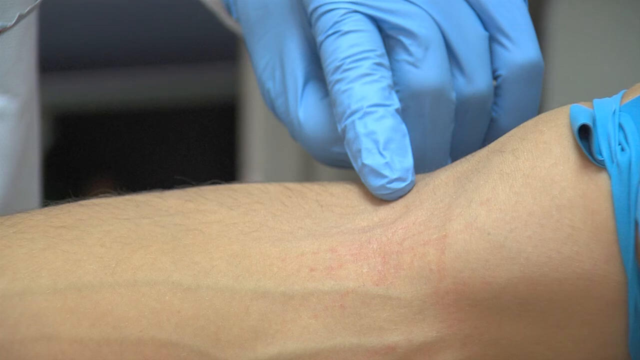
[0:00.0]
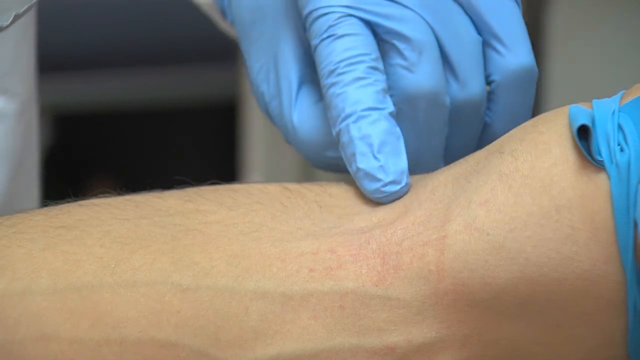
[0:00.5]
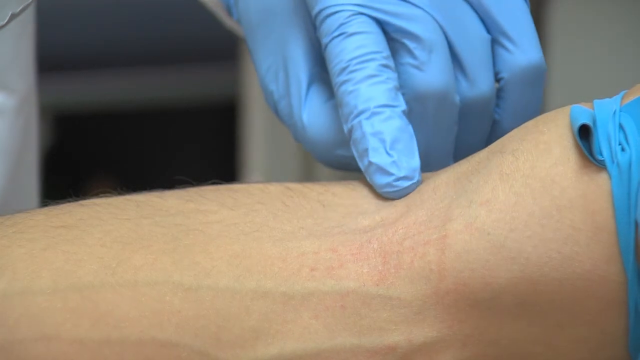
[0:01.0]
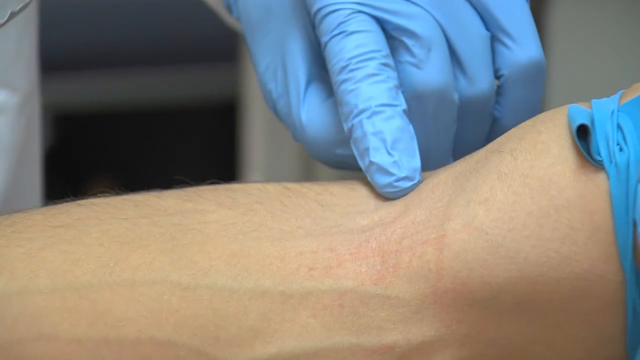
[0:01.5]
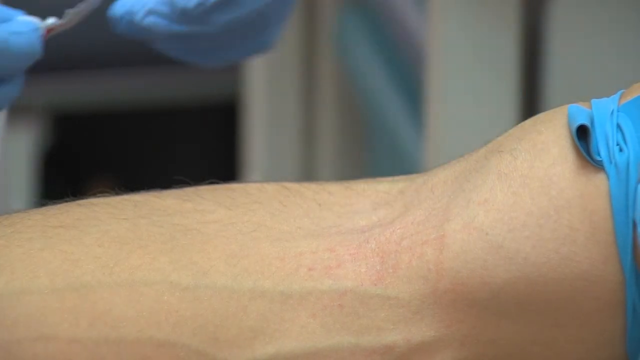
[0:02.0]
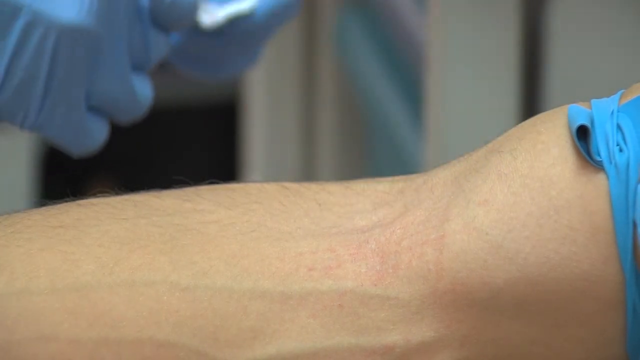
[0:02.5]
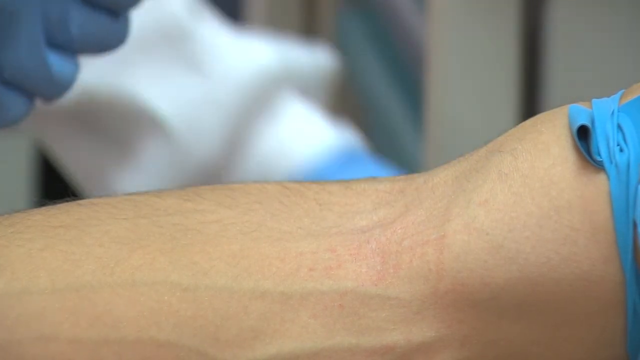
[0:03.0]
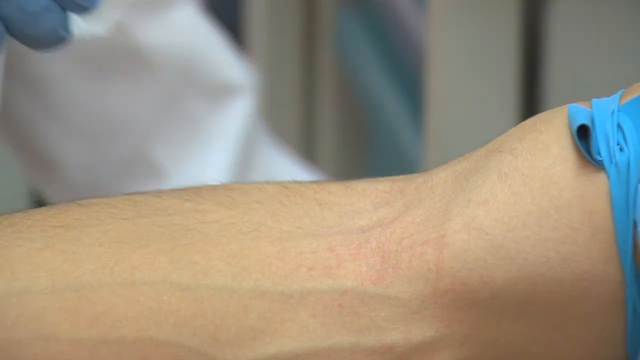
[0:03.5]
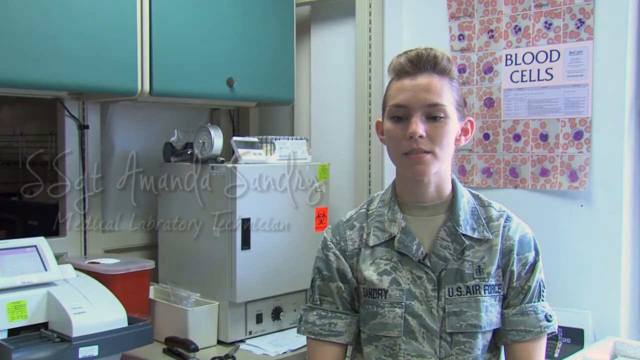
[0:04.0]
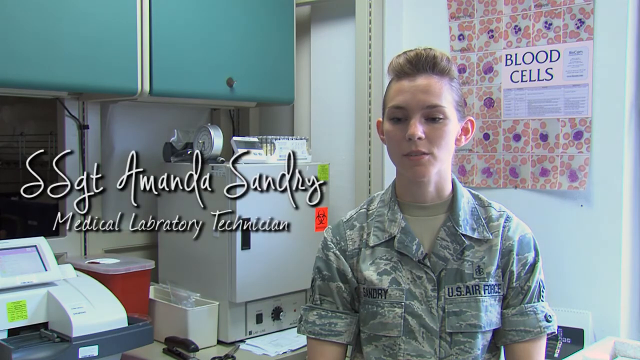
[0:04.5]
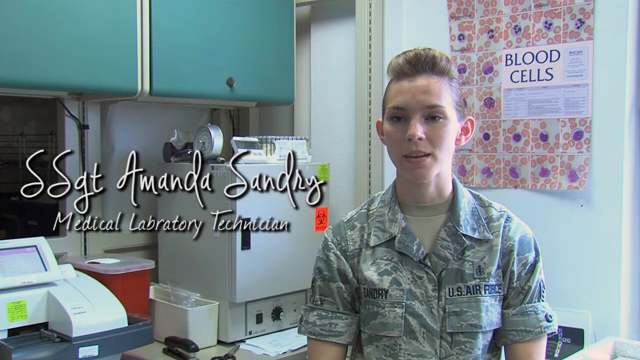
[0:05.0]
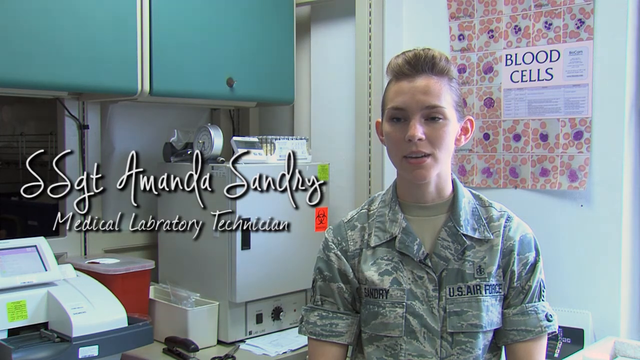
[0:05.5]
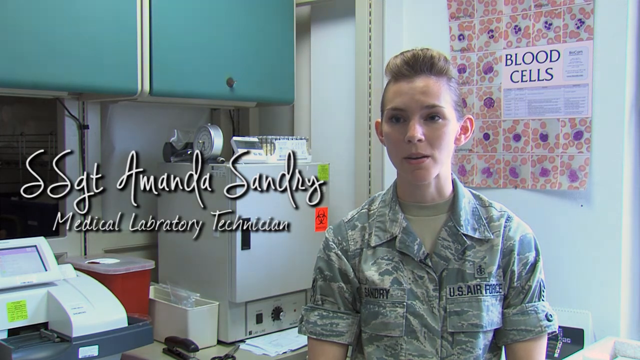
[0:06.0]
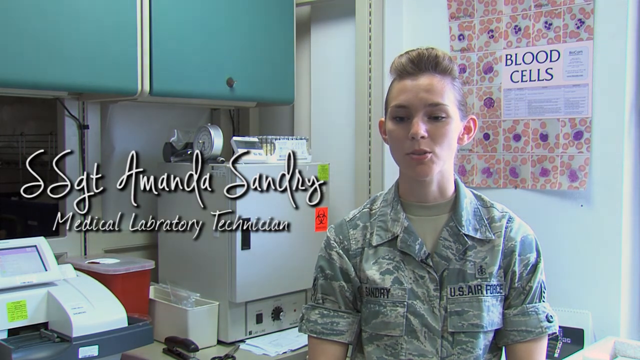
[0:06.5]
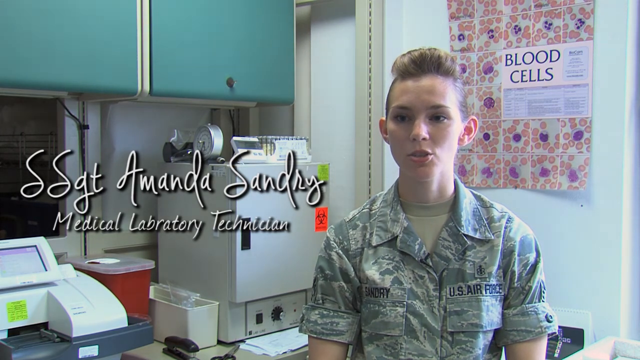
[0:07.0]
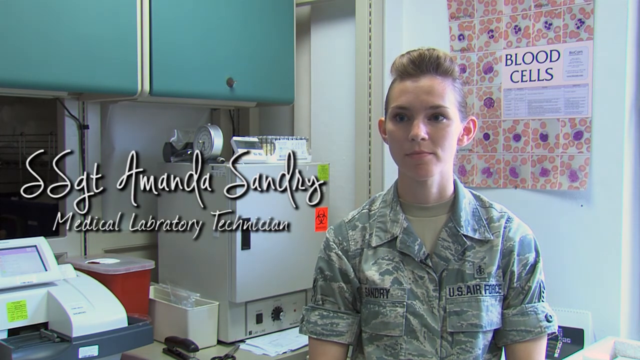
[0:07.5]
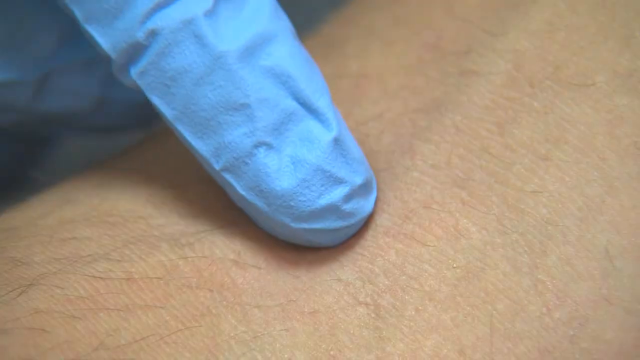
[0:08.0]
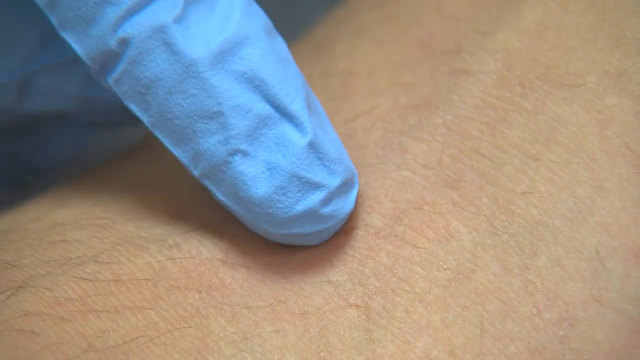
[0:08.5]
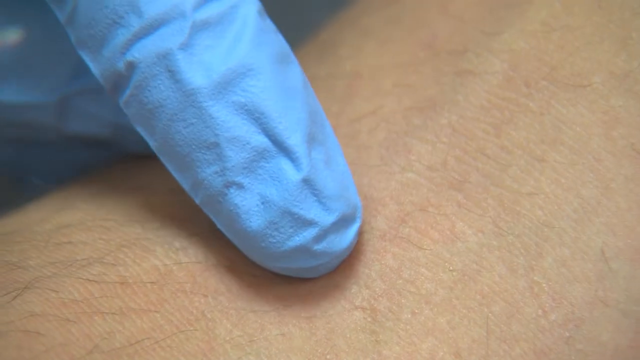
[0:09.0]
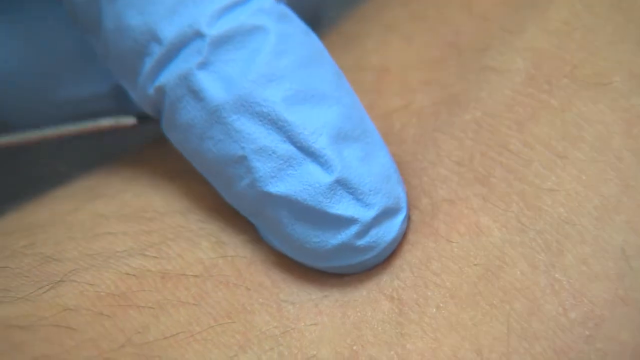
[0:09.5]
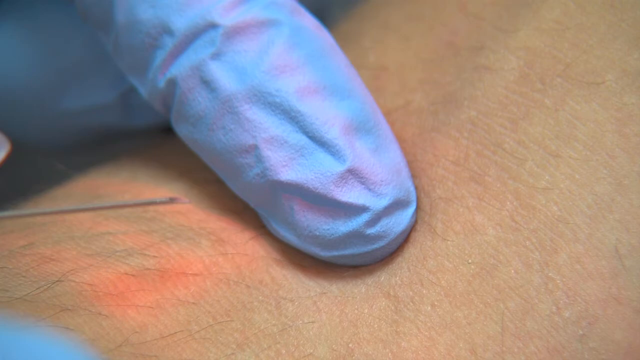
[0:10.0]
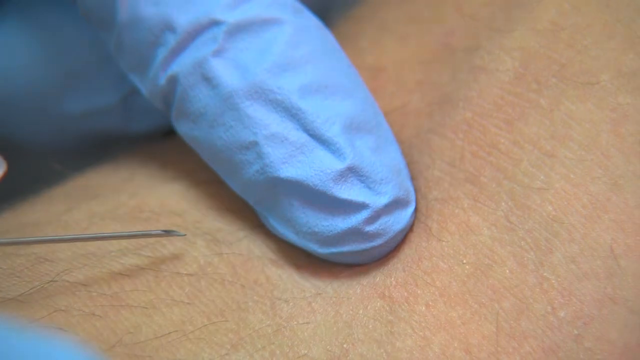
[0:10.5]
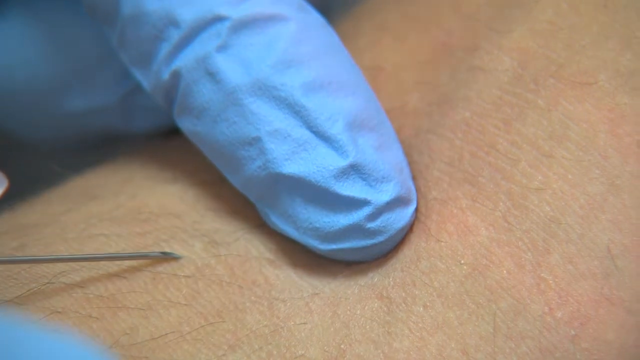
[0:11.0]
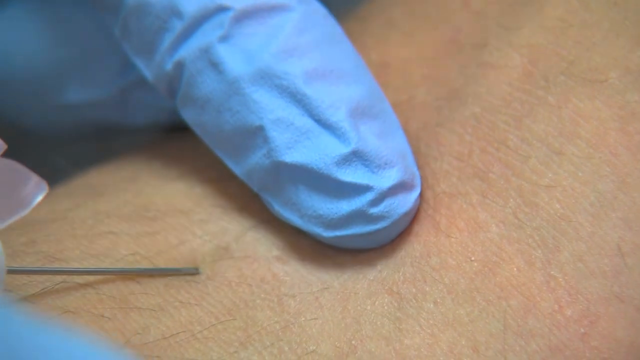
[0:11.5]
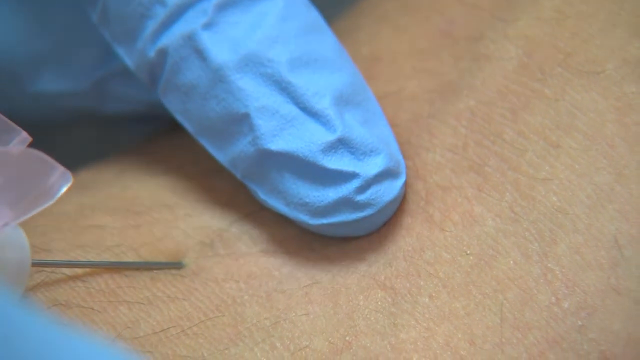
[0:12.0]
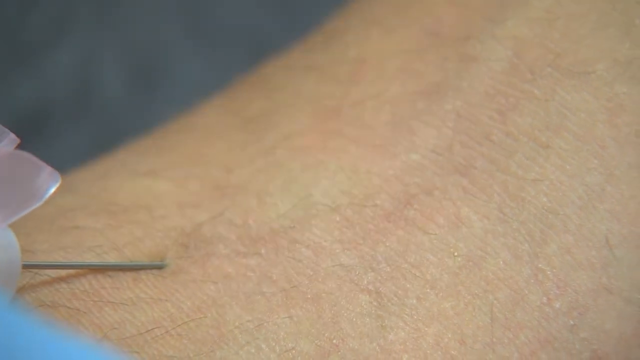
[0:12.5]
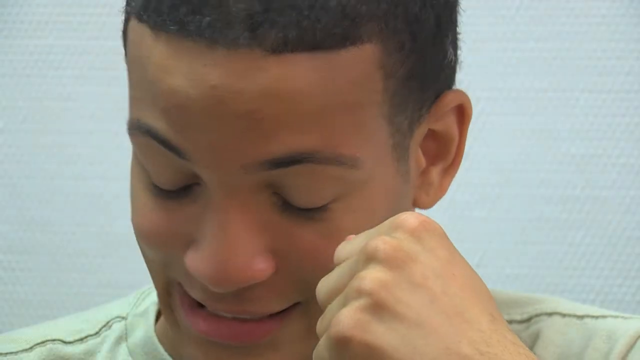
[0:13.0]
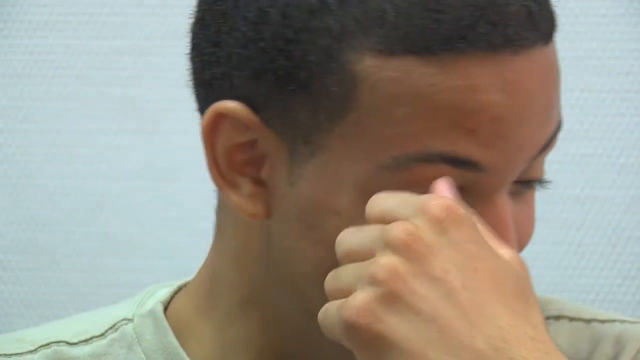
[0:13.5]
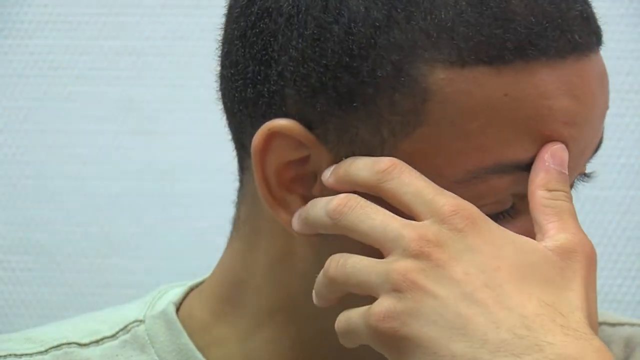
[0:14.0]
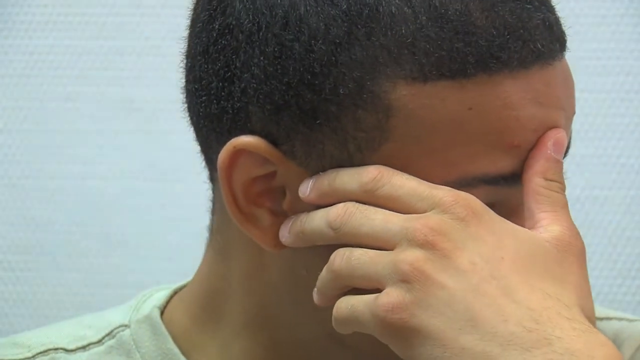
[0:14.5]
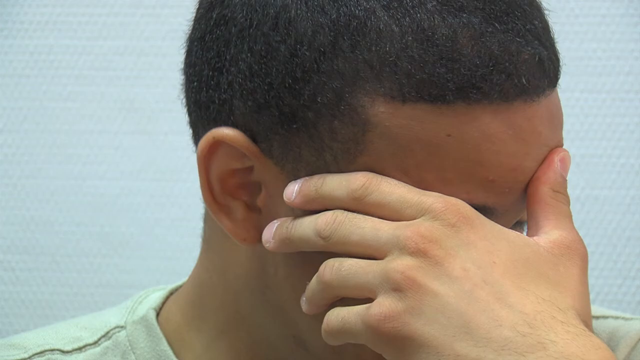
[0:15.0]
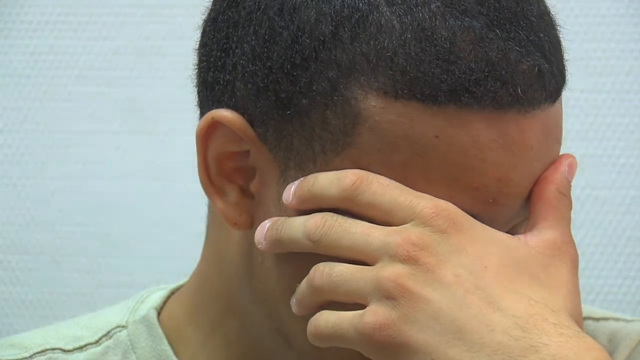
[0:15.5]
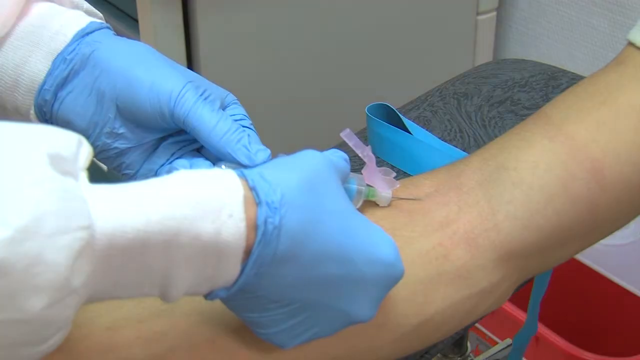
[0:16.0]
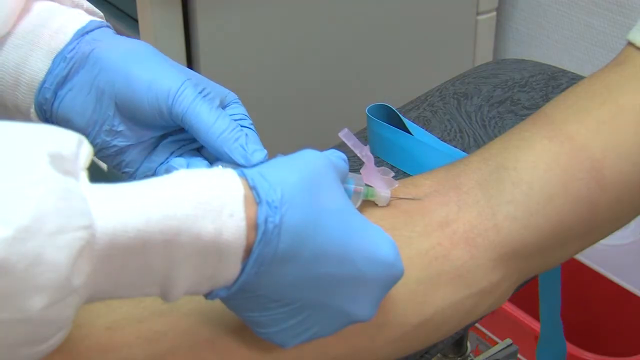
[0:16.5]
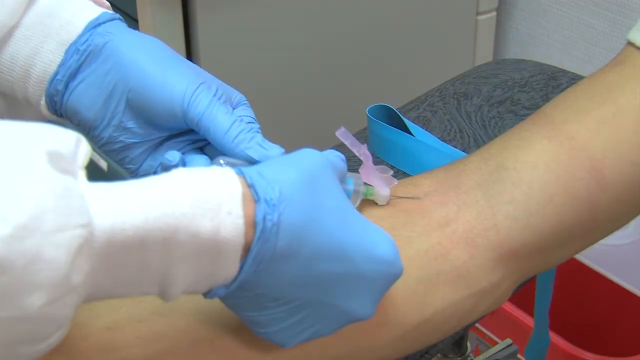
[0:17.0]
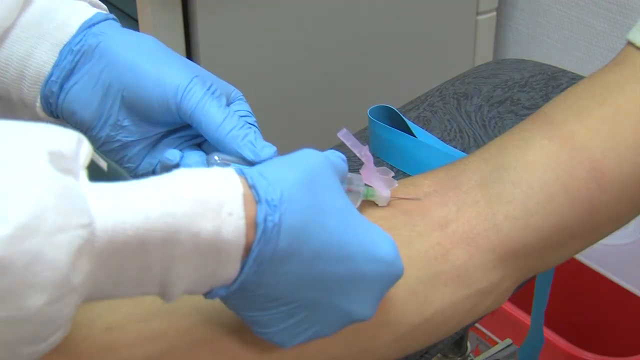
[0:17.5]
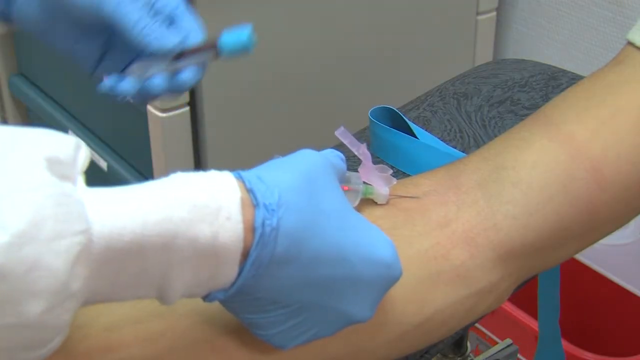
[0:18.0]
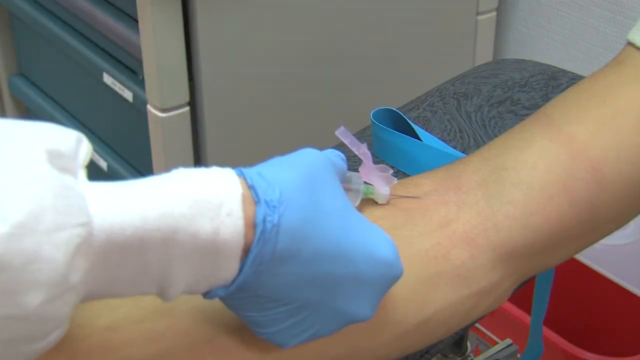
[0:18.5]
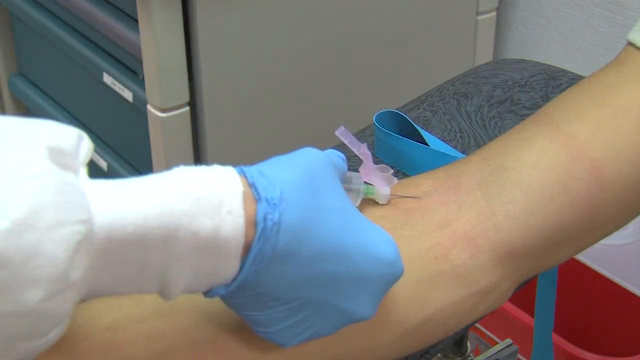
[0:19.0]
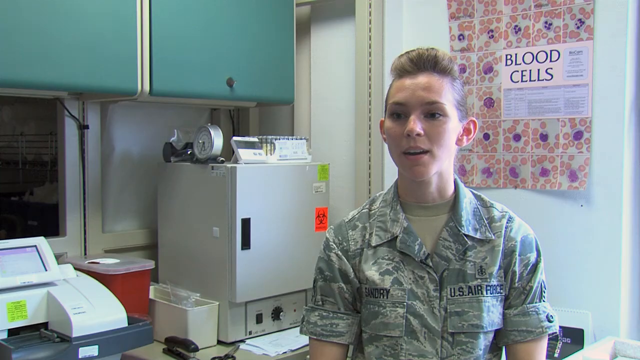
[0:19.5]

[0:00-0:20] What appears to be a doctor rubs a finger on the vein area of someone's arm, apparently preparing to draw blood from it. He then pulls out what looks like a wet wipe and wipes the area, apparently to make sure it is clean. The needle going in is not shown; instead the video cuts to what seems to be a different person, Sergeant Amanda Sandry, who is part of the Army or the U.S. Air Force and is a medical laboratory technician. She wears the Army colors in a sort of vest fashion, and her hair is not fully shaved but is shaved on the left and right sides. The blood draw is shown: the needle goes in, and the man's reaction is shown; he looks really scared and freaked out.